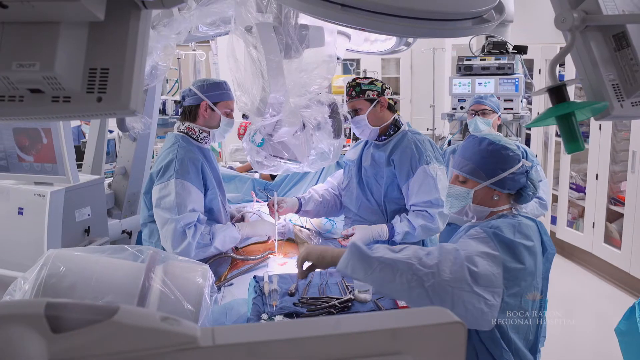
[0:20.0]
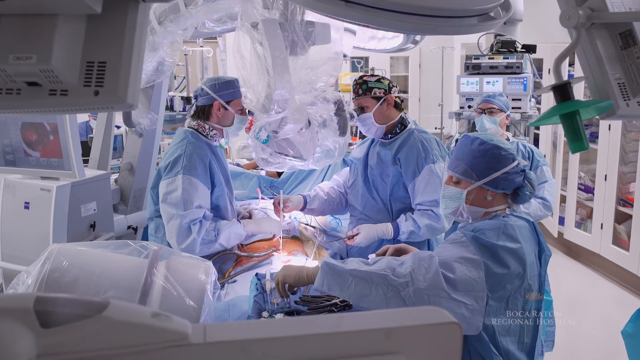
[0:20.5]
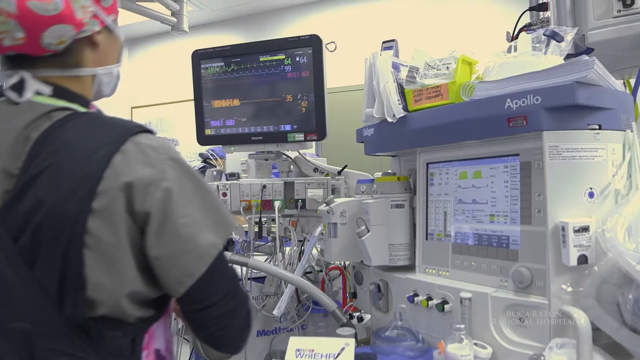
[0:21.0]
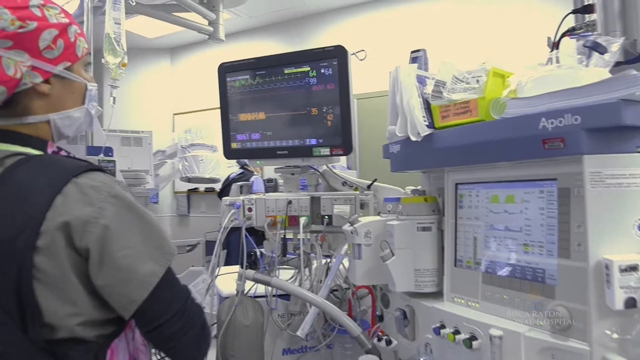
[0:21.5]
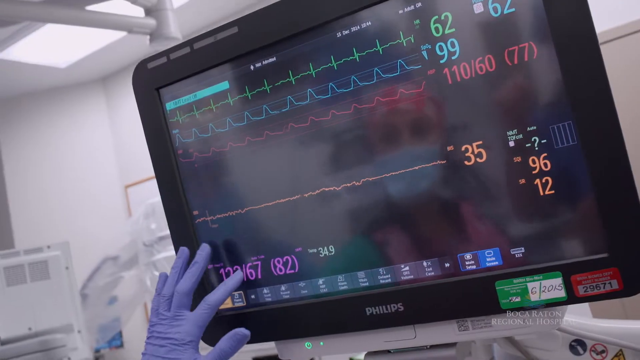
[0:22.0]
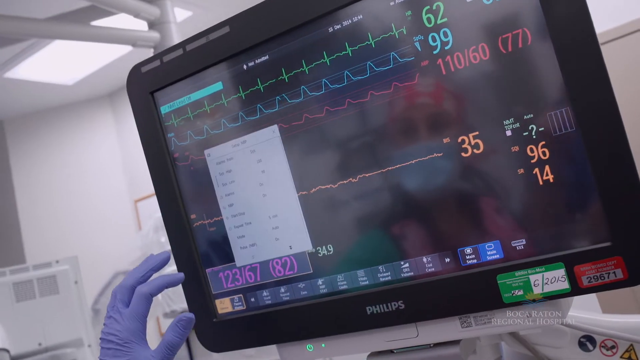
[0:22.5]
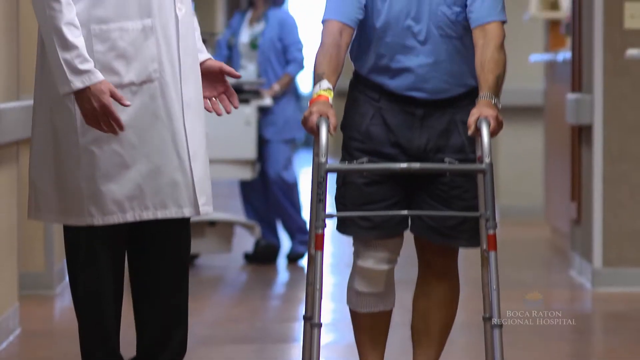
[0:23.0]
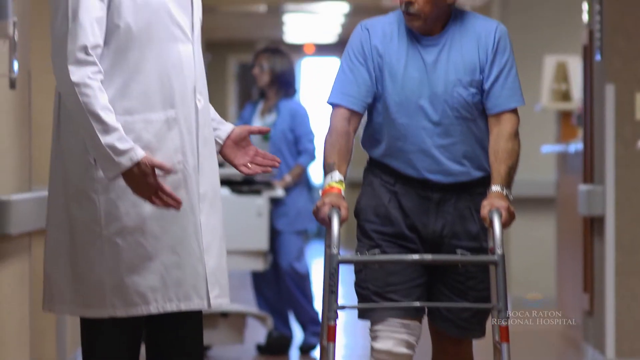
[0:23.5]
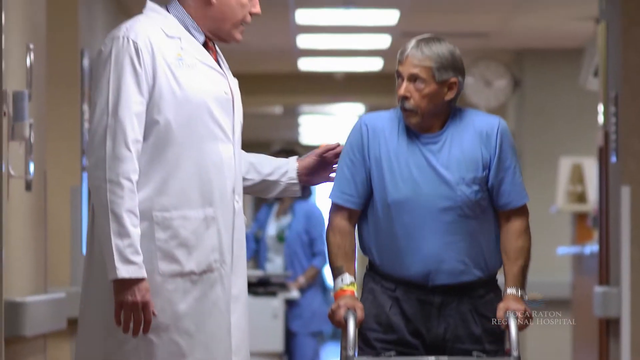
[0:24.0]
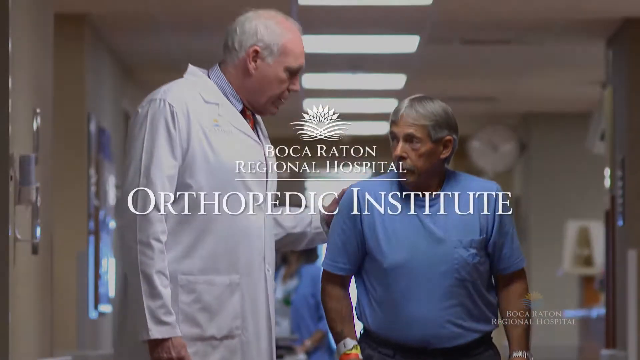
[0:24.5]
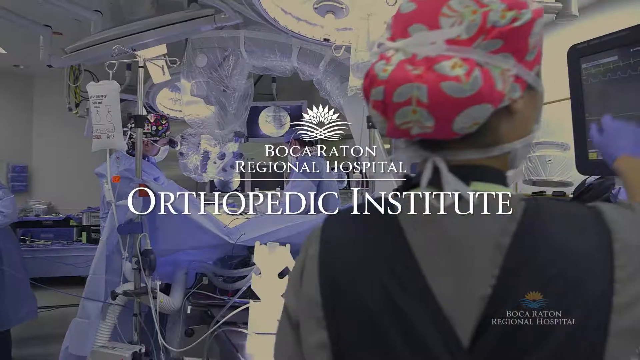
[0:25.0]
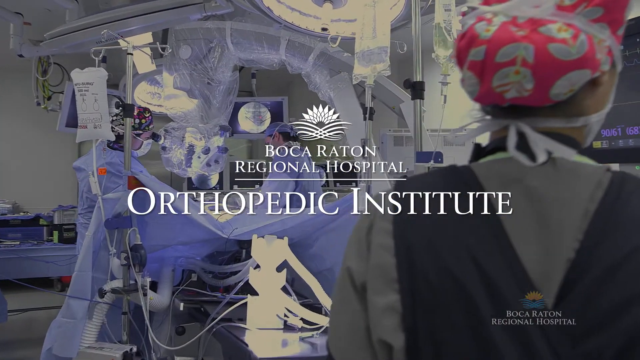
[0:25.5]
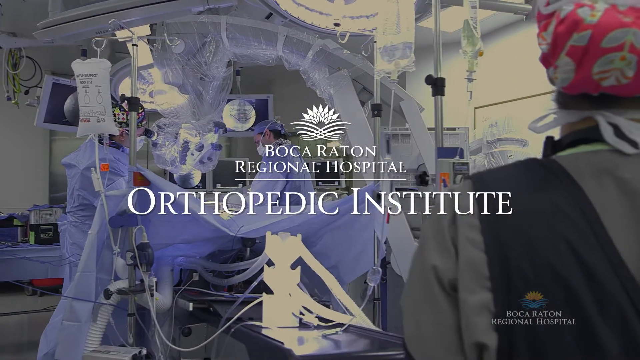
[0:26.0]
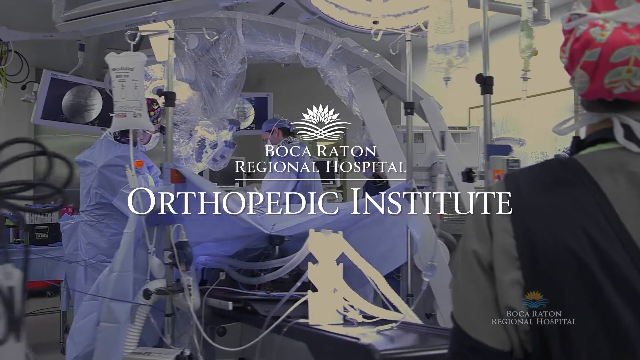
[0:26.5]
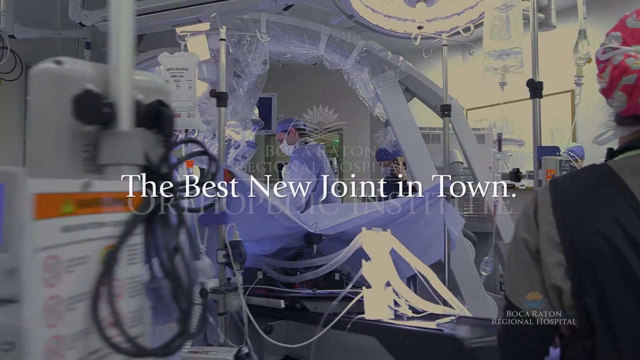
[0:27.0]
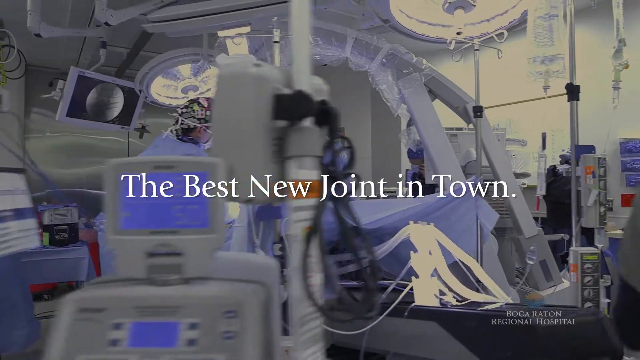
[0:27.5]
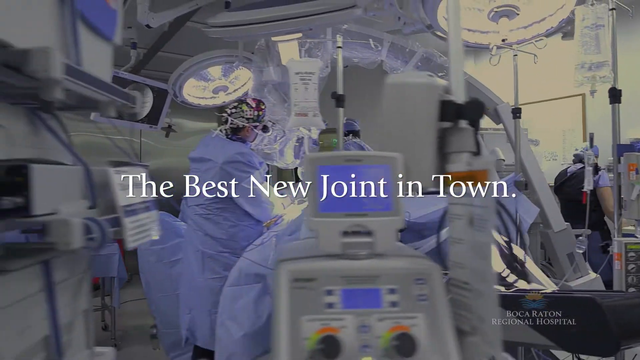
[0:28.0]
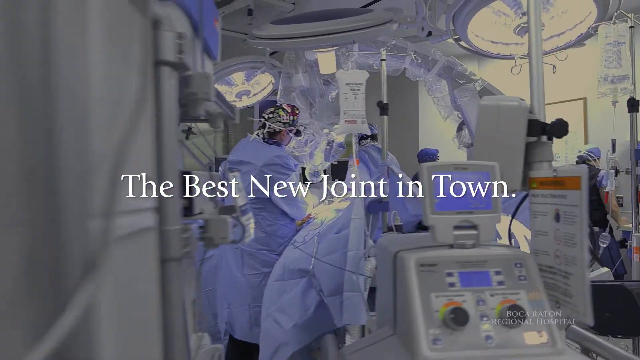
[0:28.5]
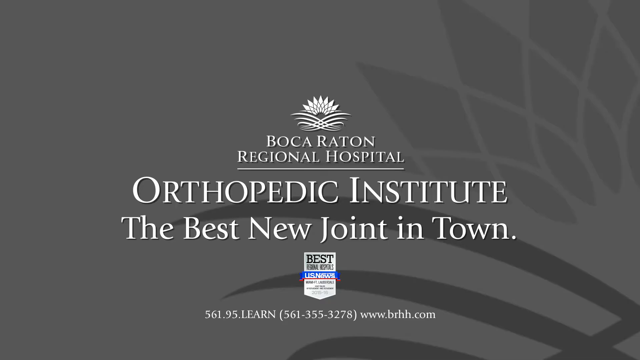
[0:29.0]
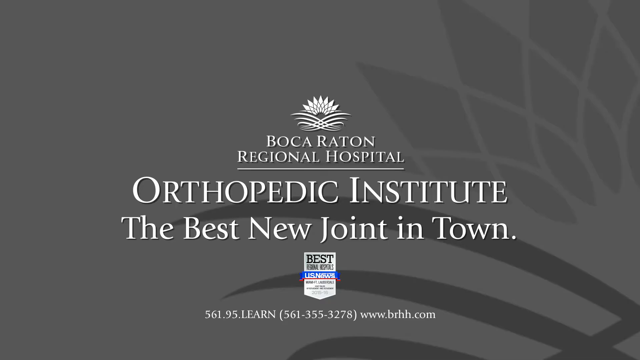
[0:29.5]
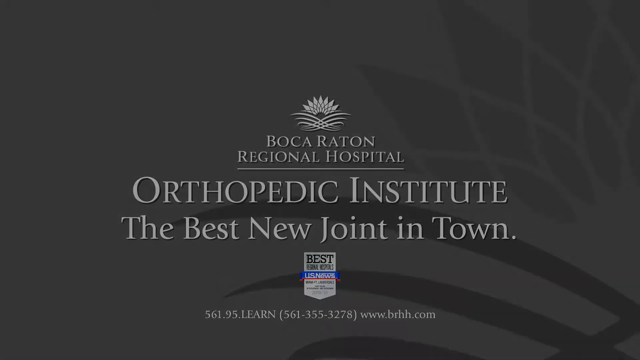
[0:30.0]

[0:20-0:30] Different views of medical settings continue, including close-ups of monitors in the operating room. An older man in a short-sleeved blue t-shirt walks down a hall with a walker; to his left, a tall doctor in a white lab coat puts his left hand on the man's back, and they look at each other. Another view of an operating room follows. White text then appears reading "Boca Raton Regional Hospital Orthopedic Institute", with a small white graphic almost like a sunrise with many lines above it. "Boca Raton Regional Hospital" is smaller and spread over two lines, with a solid line beneath it, and "Orthopedic Institute" is in larger white text; all of it is in serif capitals. That text disappears and white text reads "the best new joint in town". The video ends with an all-black graphic showing both texts stacked: the "Boca Raton Regional Hospital Orthopedic Institute" logo and "the best new joint in town", with a logo underneath, possibly a small award.